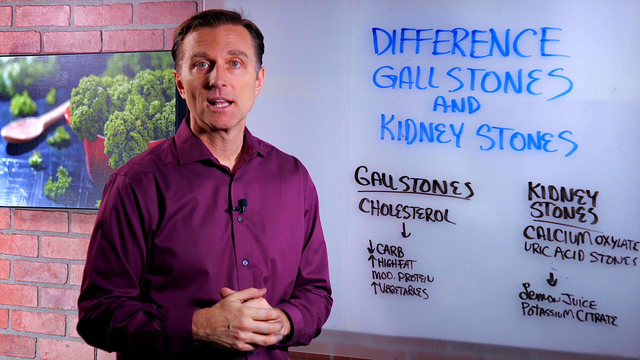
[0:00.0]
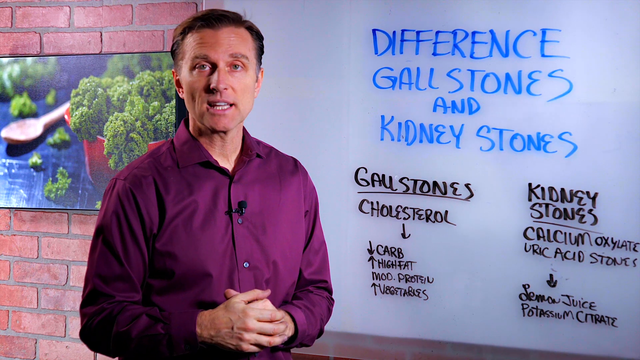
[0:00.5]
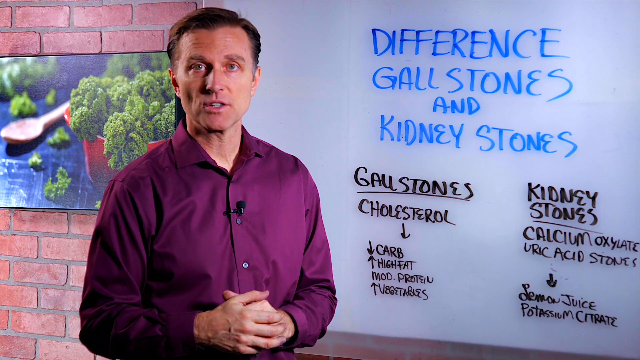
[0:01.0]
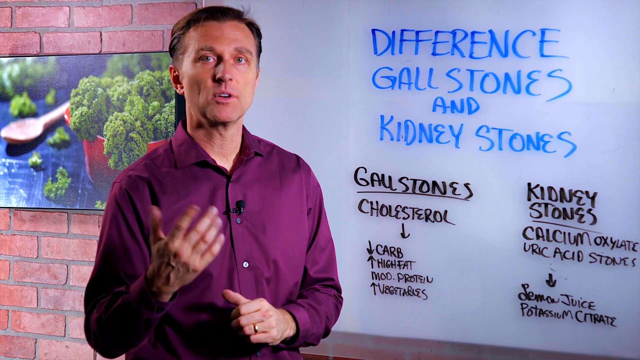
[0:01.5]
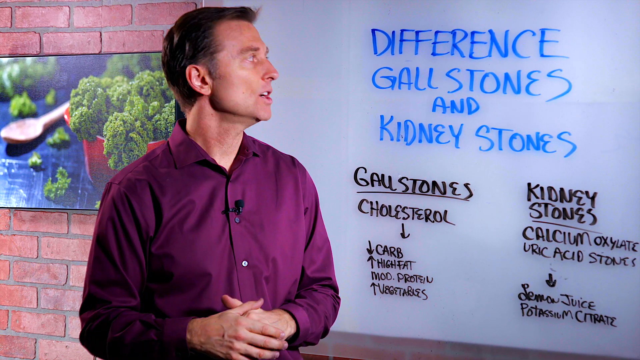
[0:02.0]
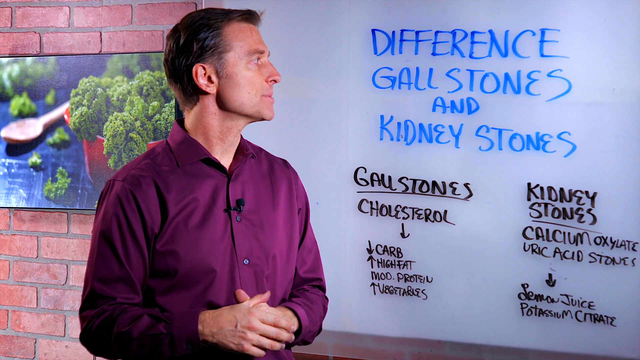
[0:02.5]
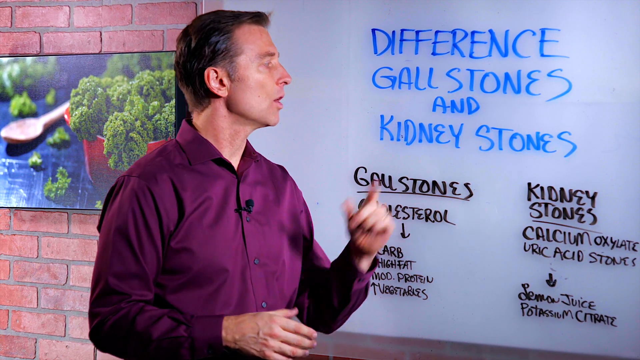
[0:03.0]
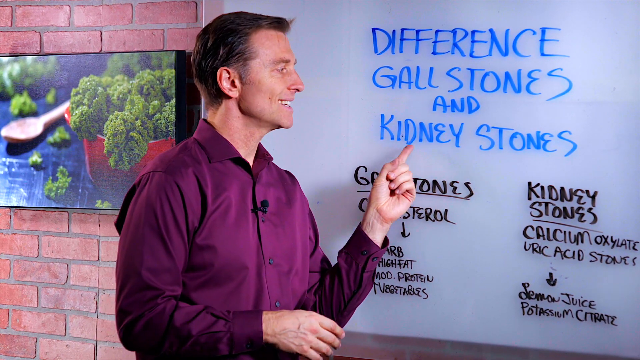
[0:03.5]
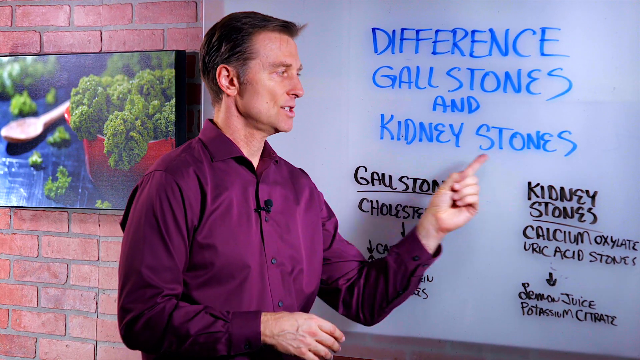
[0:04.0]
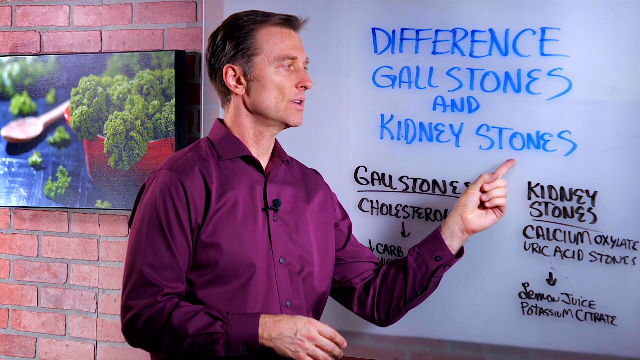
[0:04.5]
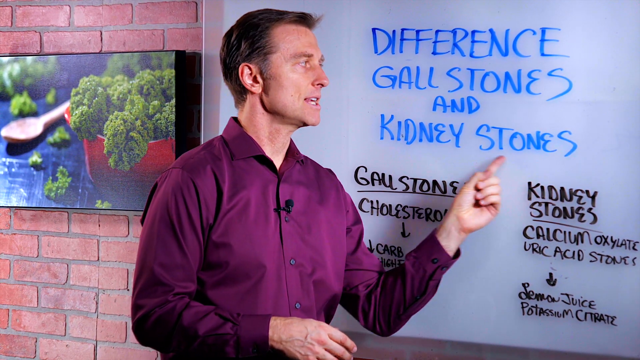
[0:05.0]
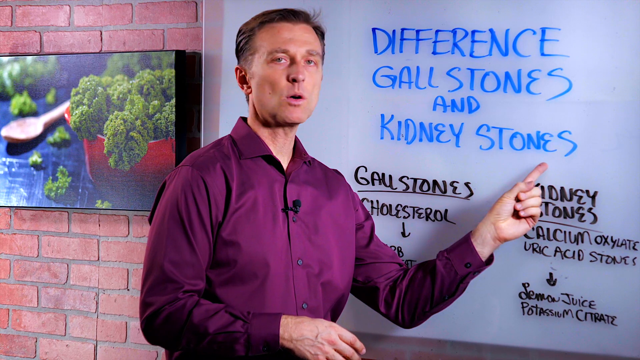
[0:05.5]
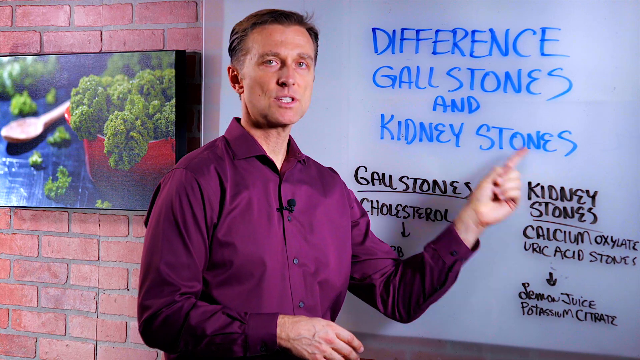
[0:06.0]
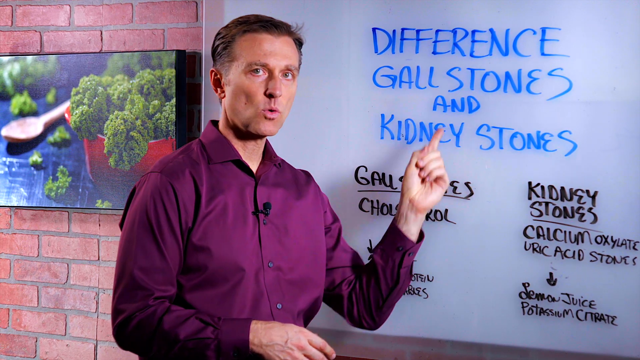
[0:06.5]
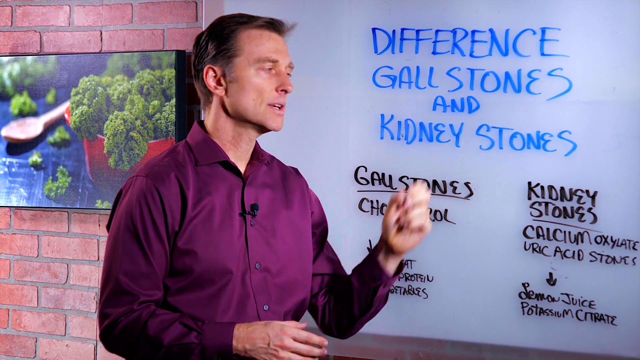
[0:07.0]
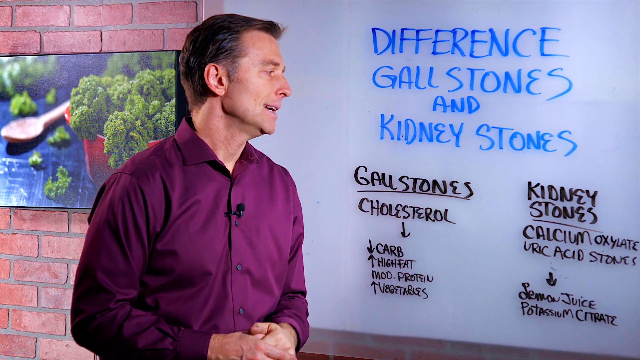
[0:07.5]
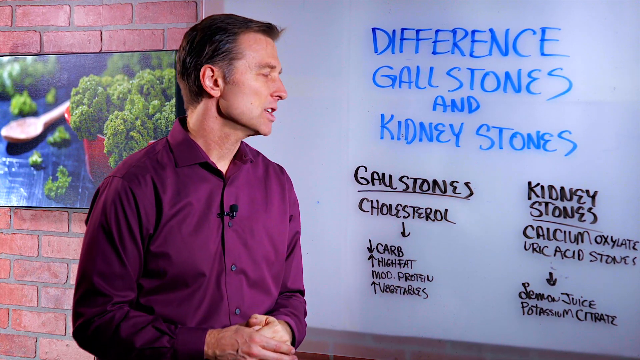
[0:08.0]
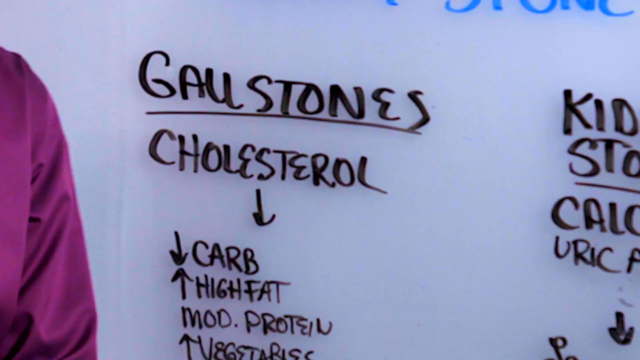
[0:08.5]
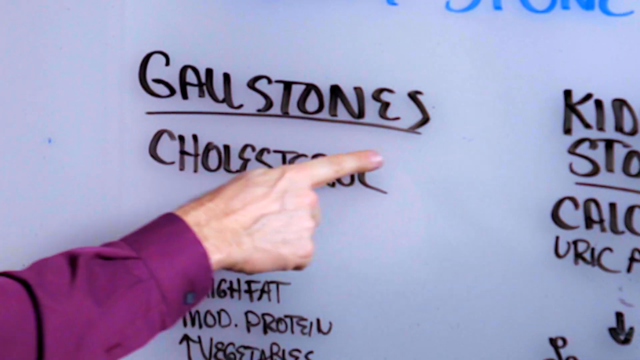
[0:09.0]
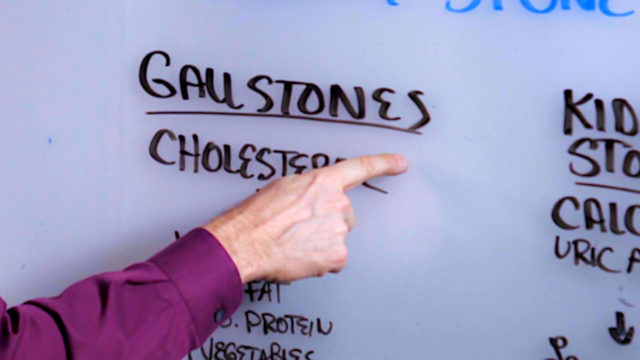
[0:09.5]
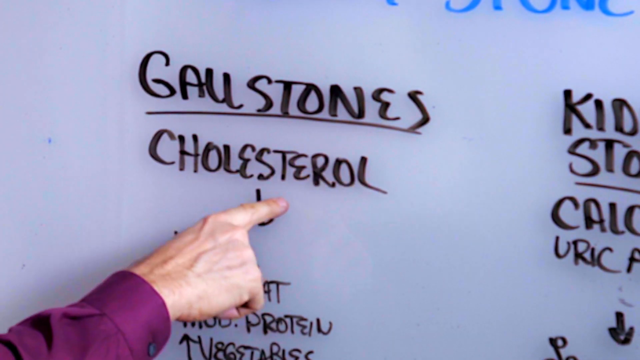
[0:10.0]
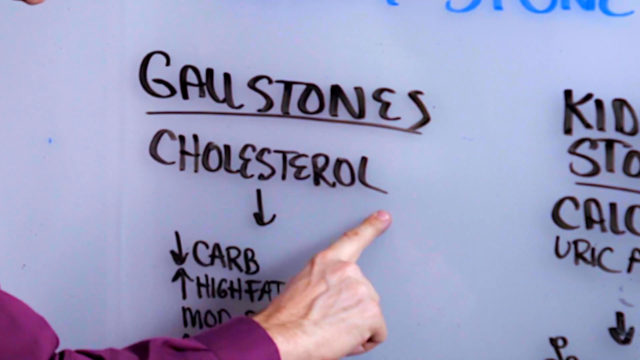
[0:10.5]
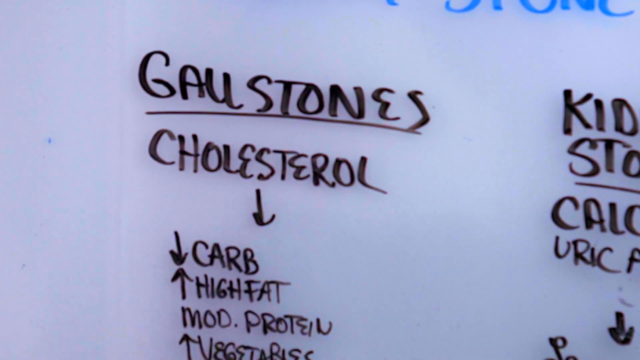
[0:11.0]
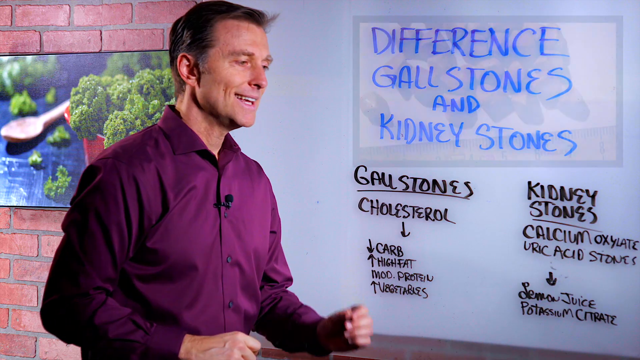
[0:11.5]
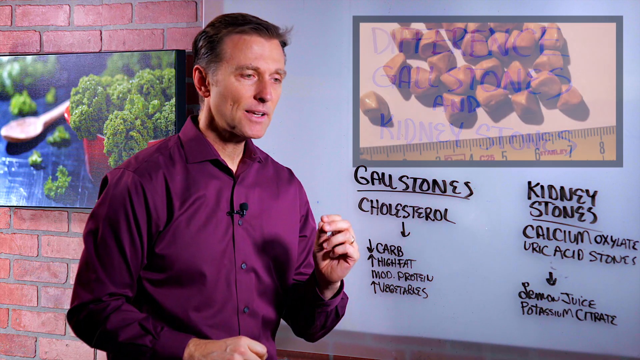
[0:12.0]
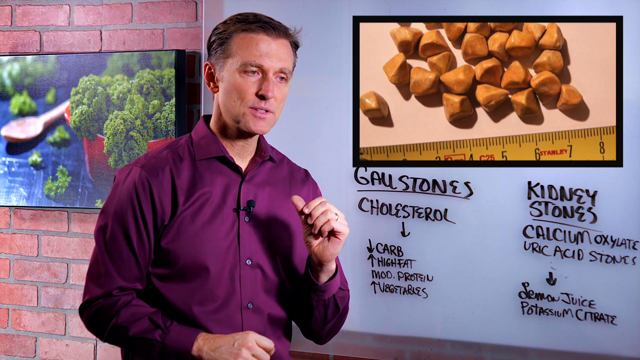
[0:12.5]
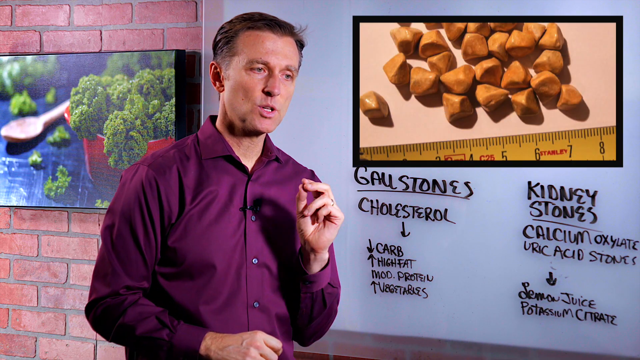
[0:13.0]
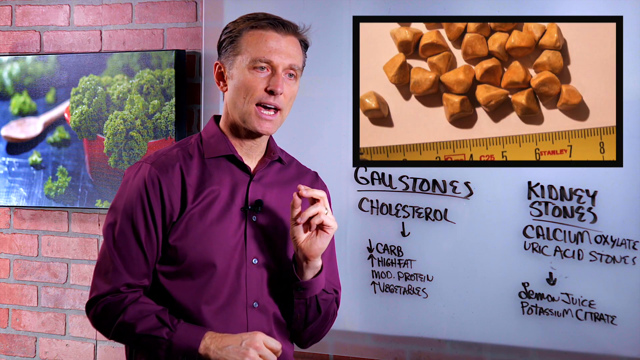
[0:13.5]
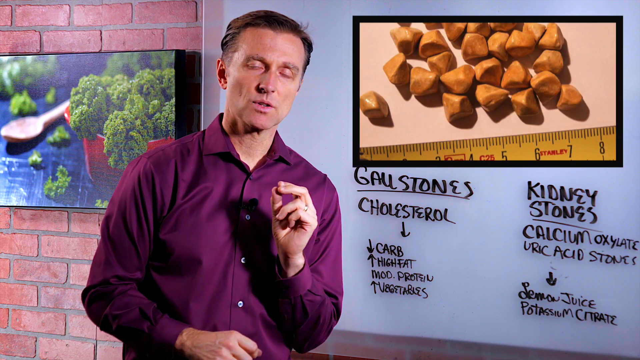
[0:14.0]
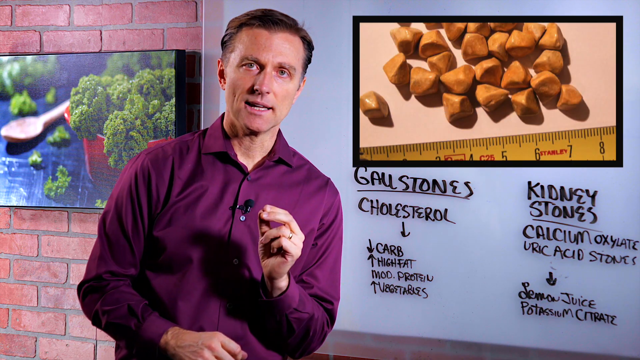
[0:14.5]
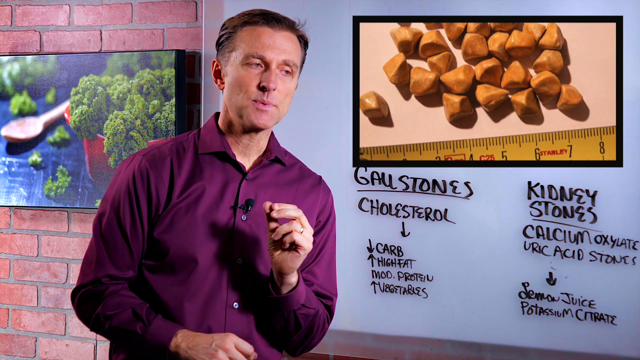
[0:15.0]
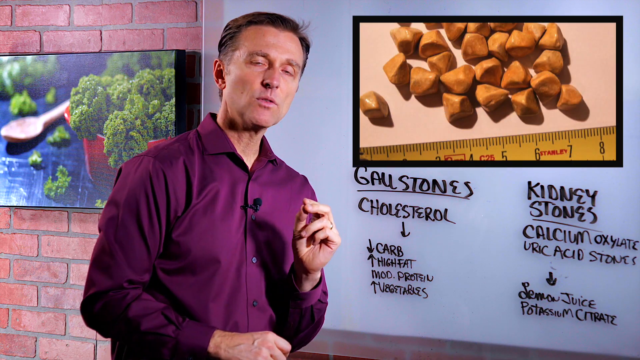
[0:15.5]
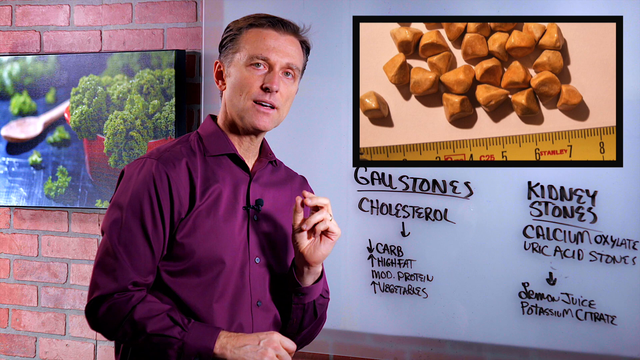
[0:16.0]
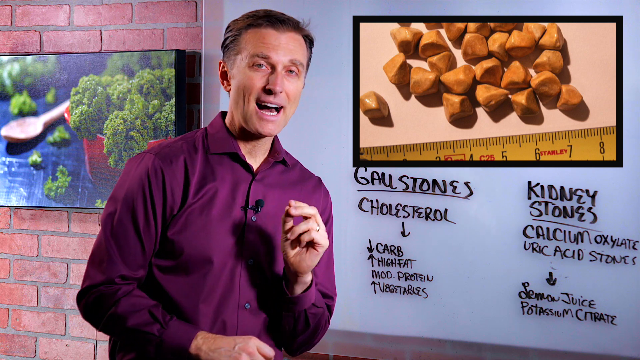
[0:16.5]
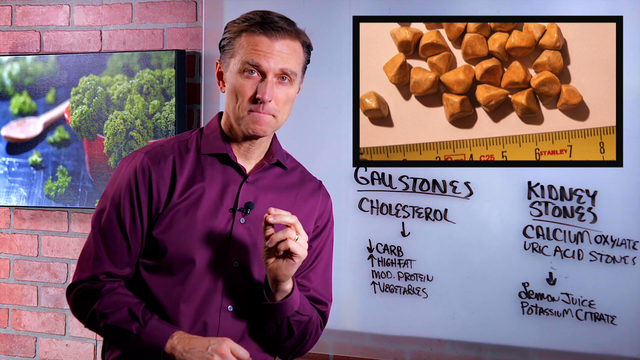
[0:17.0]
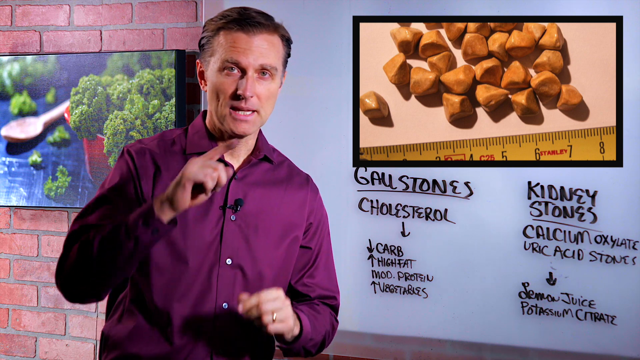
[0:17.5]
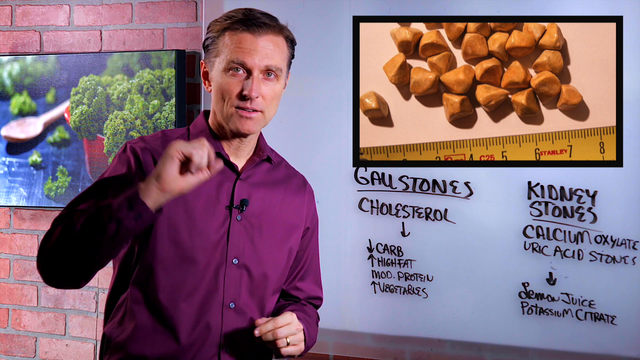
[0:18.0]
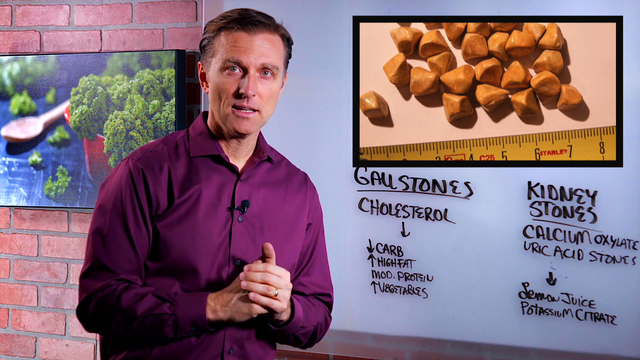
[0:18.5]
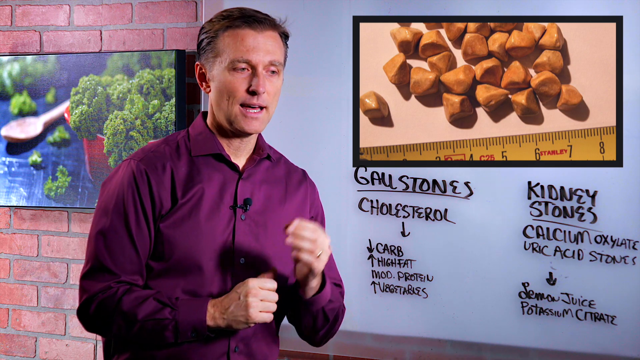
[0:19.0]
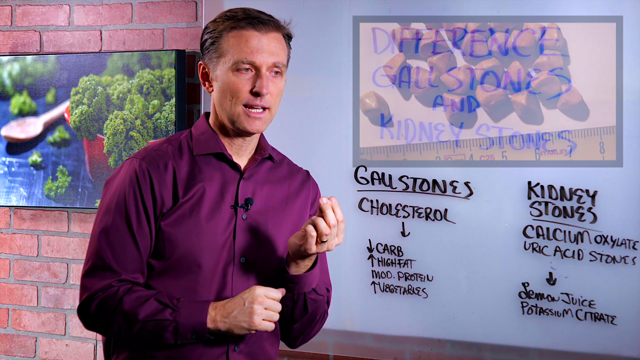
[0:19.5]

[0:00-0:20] A Caucasian man with short brown hair stands just left of center, seen from the waist up. He wears a purple collared long-sleeve shirt buttoned down the front, with a microphone clipped just above the second button. Behind him to the right is a whiteboard with writing on it. Behind him to the left is a red brick wall with a screen or an image of green plant material in a red pot, with a wooden spoon to the left of the pot, all on a blue surface, and bits of the green plant scattered on the table on both sides of the spoon. The screen behind the man has blue writing at the top that says "difference gallstones and kidney stones". In black underneath on the left is "gallstones" with a line under it, and below that "cholesterol down, down carb, up high fat, mod protein, up vegetables". To the right, in black, "kidney stones" is underlined, and under it are "calcium oxalate", "uric acid stones", a down arrow, and then "lemon juice" and "potassium citrate". The man has his hands clasped in front of his abdomen; he raises his right hand and gestures, then brings it back on top of his left hand resting on his abdomen. He points at "kidney stones" and runs his index finger down the words as he speaks. He looks back toward the camera, and then a closer image of the whiteboard shows him running his index finger under the word "cholesterol". A screen appears in the upper right corner with an image of brown stones above a yellow tape measure, which is visible up to eight. He pinches his index and middle fingers with his thumb and moves them back and forth as he stresses a point, then makes a swirling motion with his right index finger pointed.